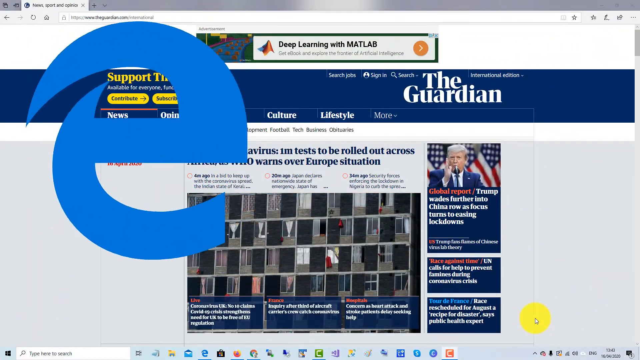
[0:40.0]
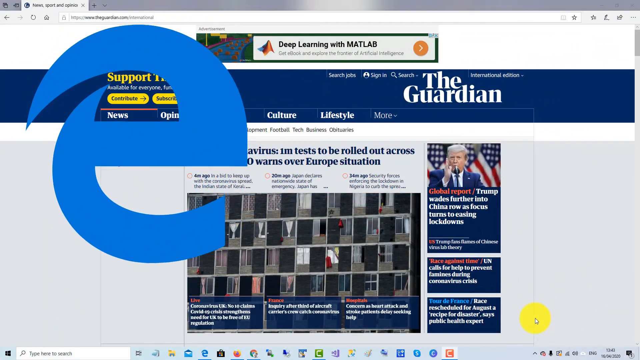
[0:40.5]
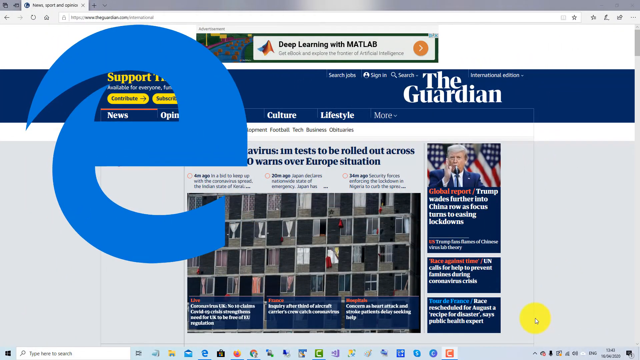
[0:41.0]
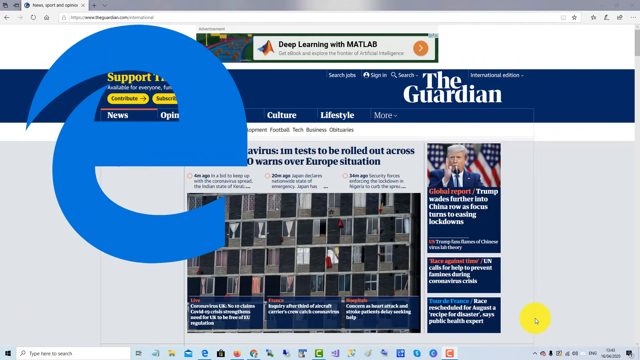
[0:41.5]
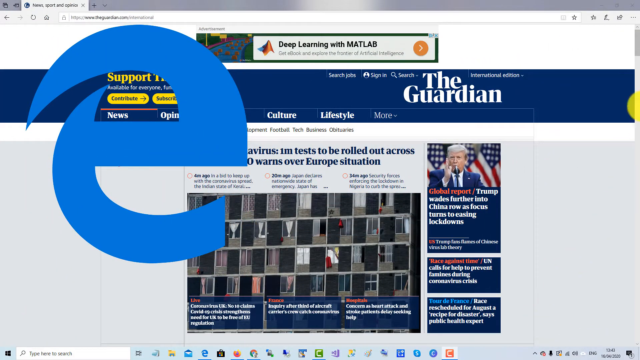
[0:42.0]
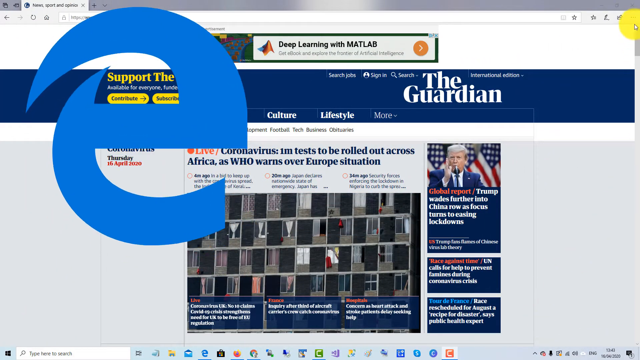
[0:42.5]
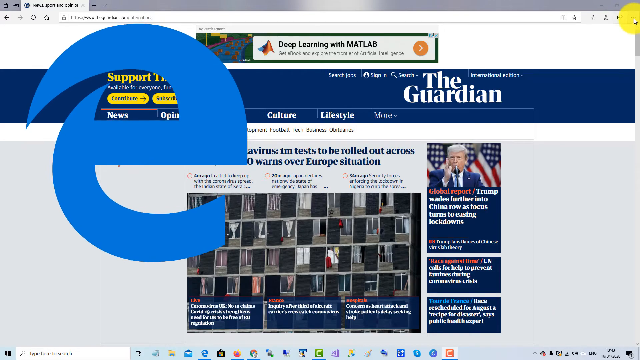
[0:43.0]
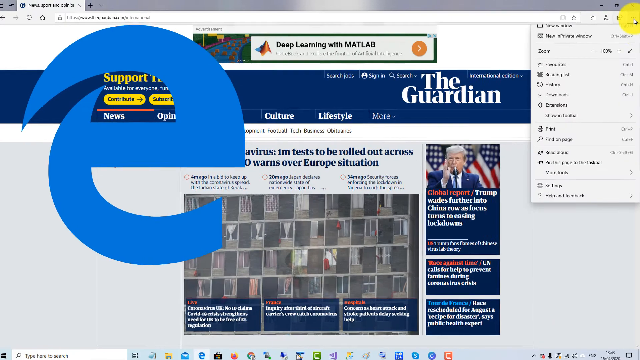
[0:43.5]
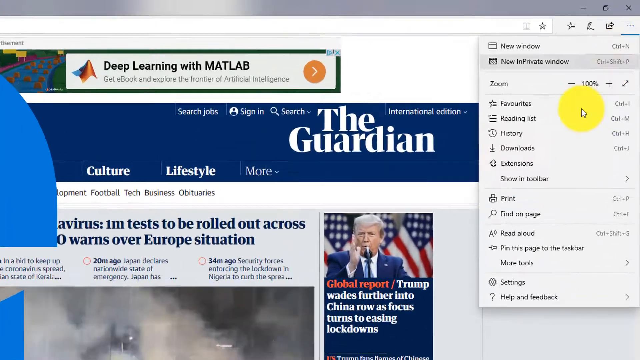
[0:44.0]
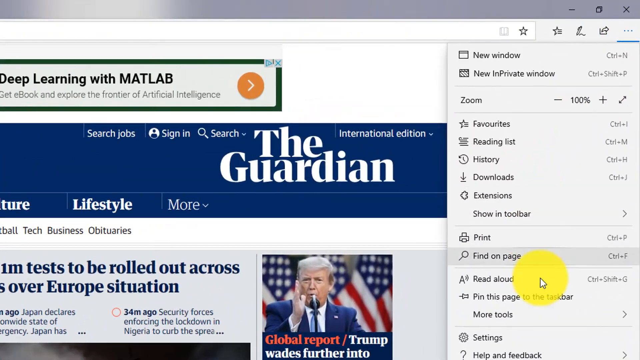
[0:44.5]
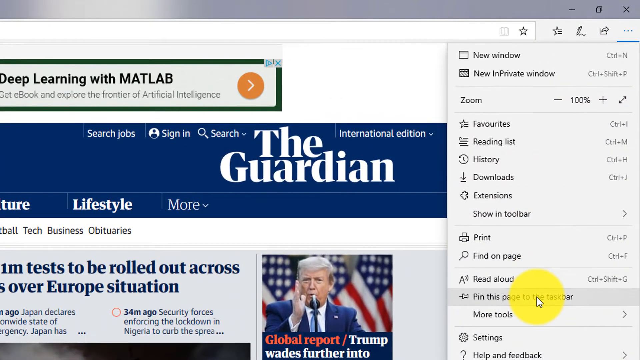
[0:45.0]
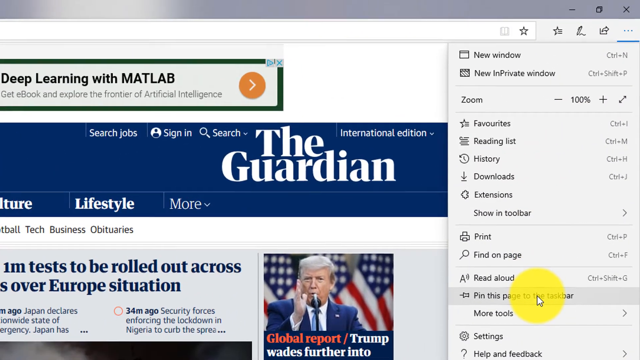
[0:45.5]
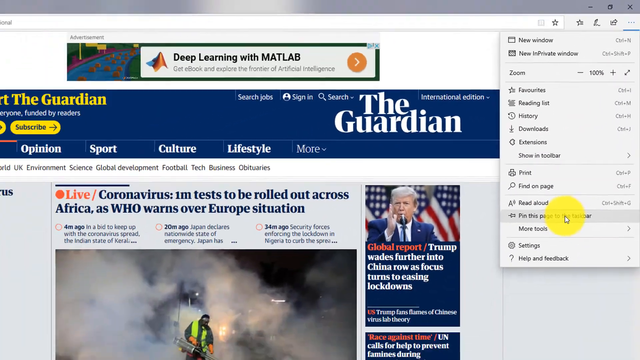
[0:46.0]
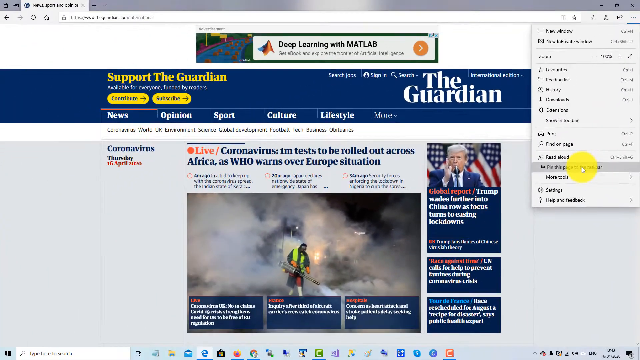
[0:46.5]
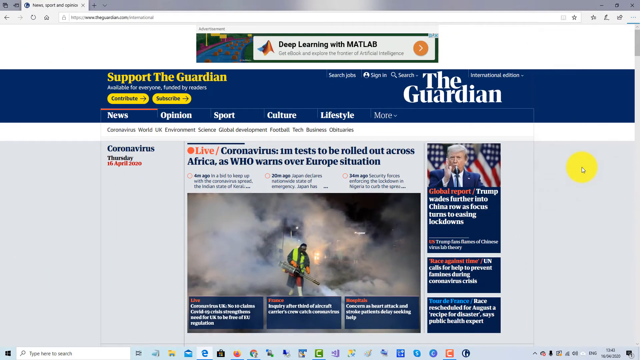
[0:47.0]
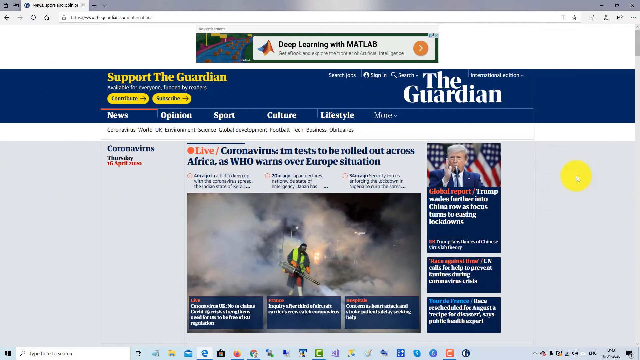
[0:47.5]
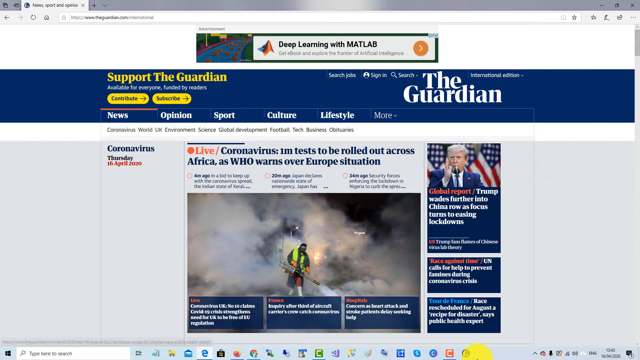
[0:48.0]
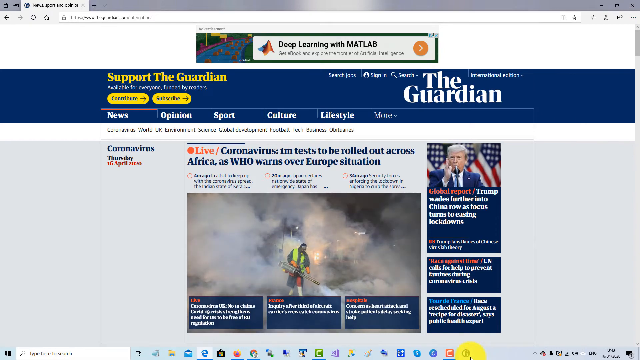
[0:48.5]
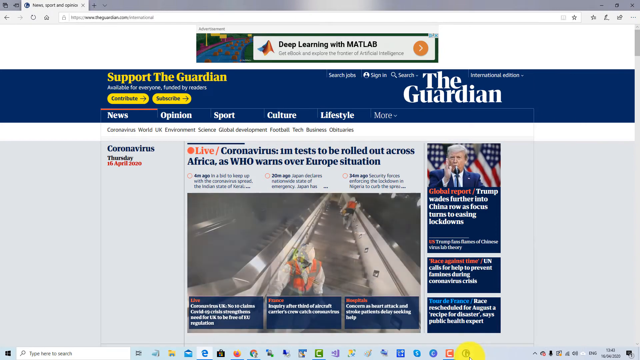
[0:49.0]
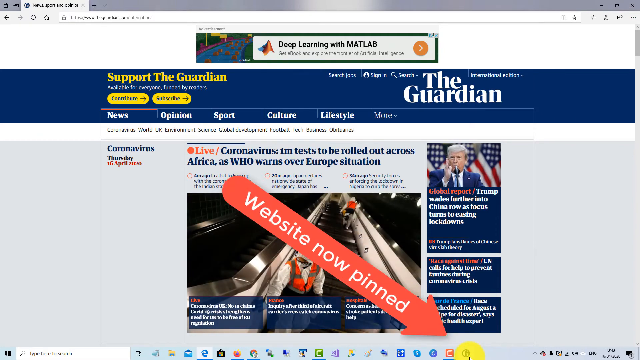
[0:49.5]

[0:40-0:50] The text "website now pinned" appears. The process is shown: clicking, dragging, then pinning. There are three downloads; the file is opened, the website is selected, then dragged and pinned. The demonstration concerns Google Chrome and Microsoft Edge. Text reading "Global Report" appears alongside coronavirus headlines, including one ending "families during coronavirus crisis". A picture shows a person wearing protective clothes.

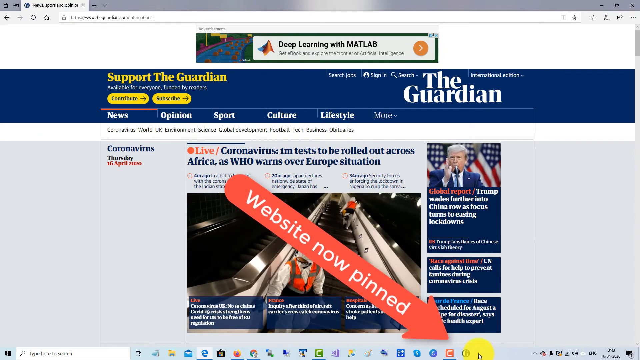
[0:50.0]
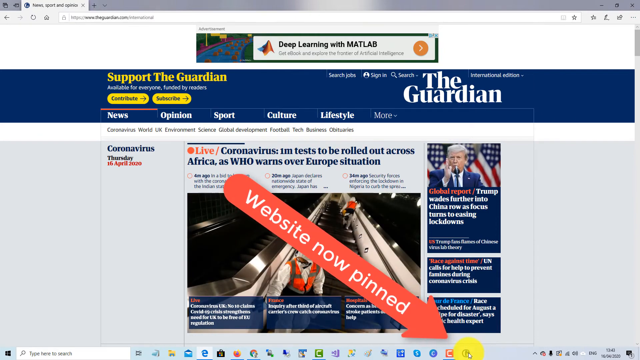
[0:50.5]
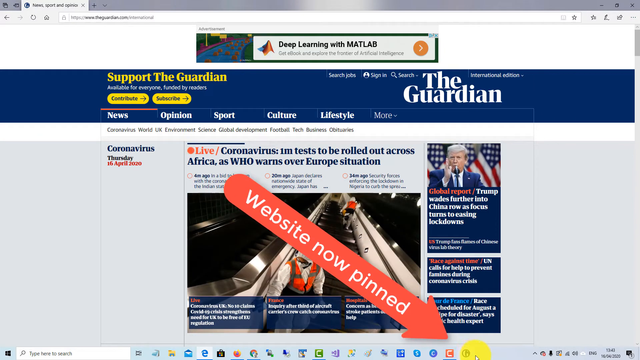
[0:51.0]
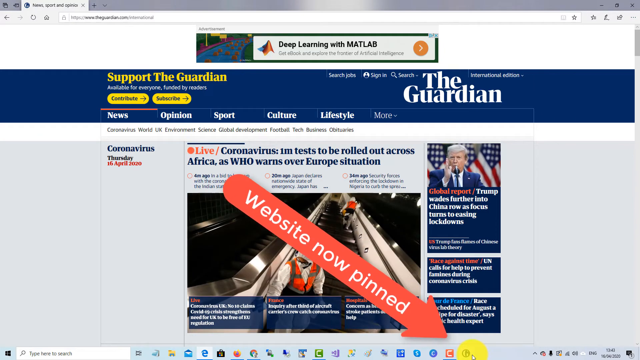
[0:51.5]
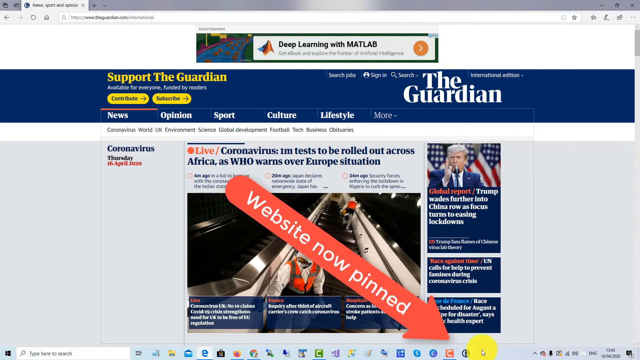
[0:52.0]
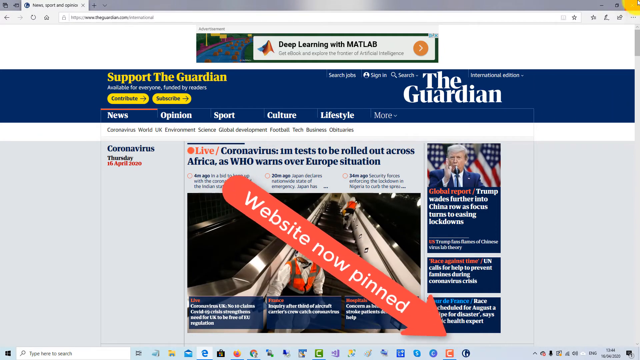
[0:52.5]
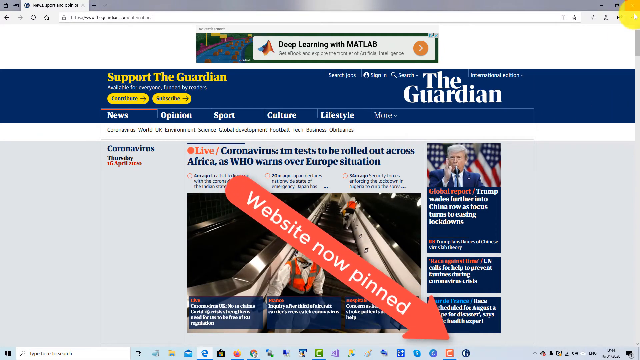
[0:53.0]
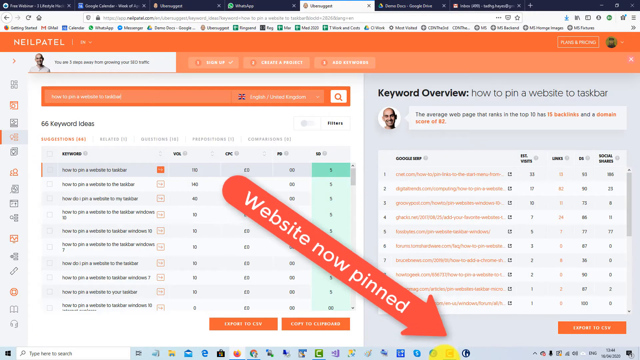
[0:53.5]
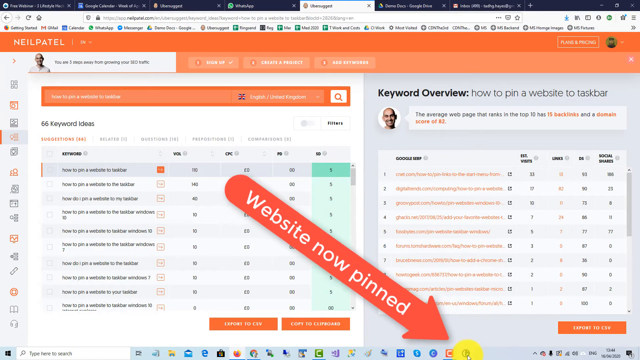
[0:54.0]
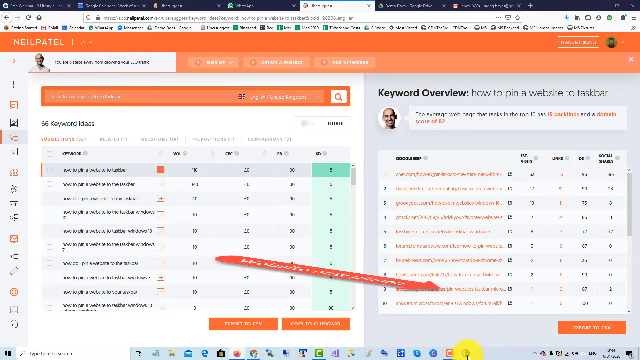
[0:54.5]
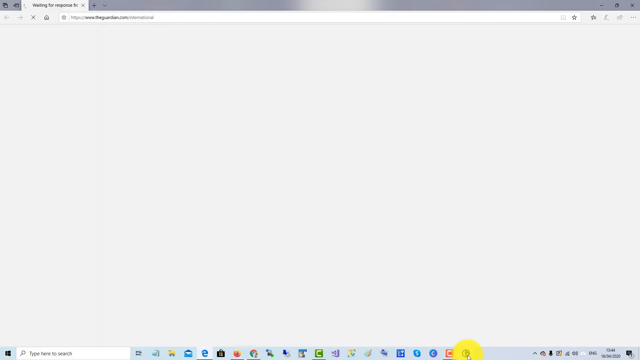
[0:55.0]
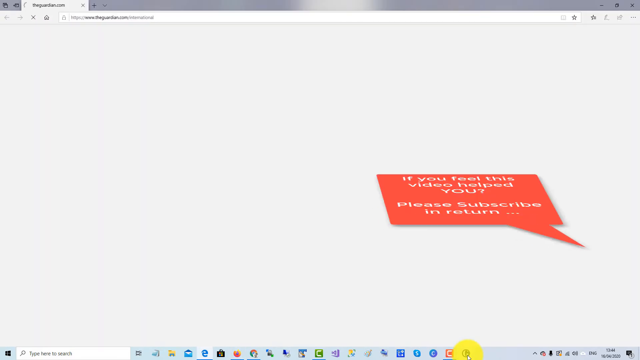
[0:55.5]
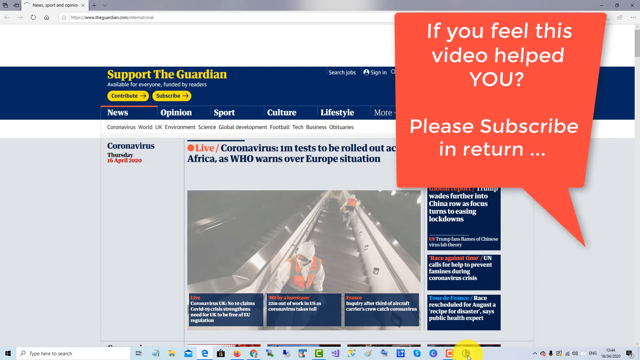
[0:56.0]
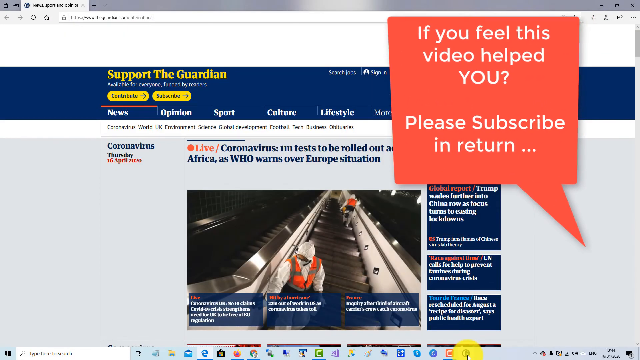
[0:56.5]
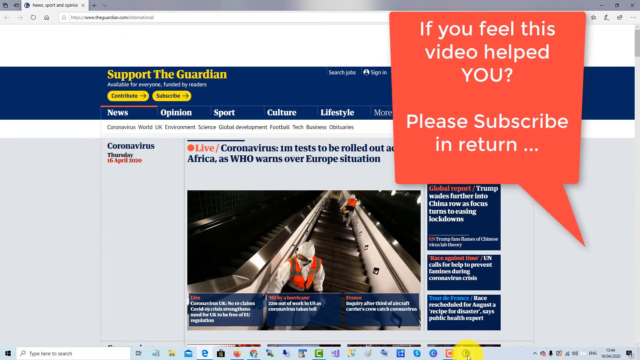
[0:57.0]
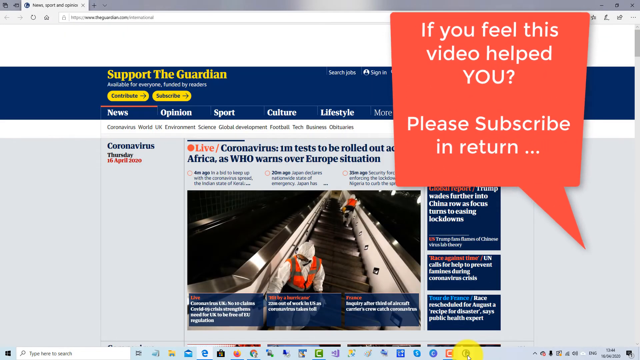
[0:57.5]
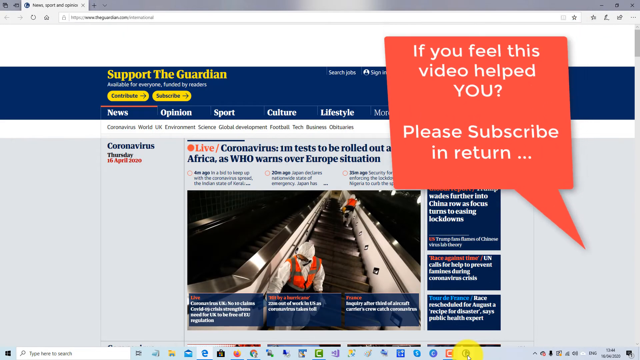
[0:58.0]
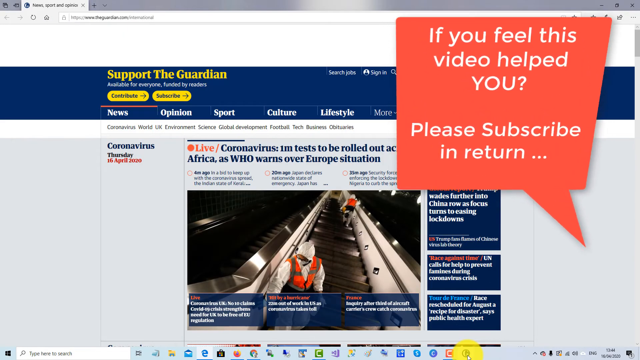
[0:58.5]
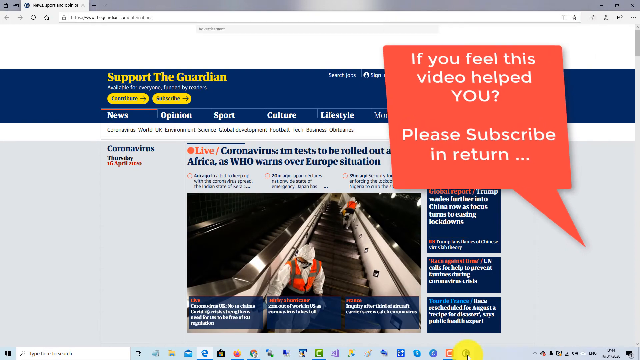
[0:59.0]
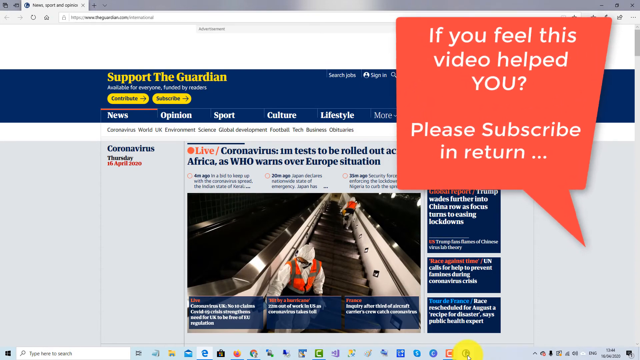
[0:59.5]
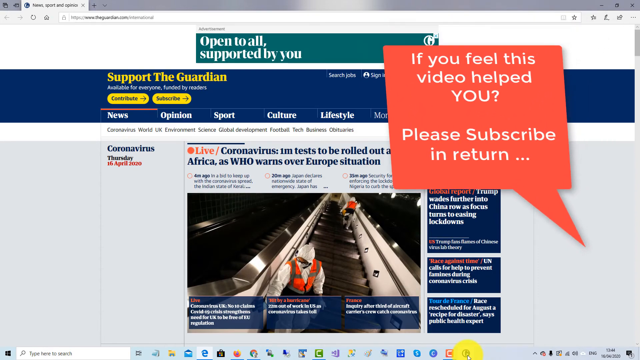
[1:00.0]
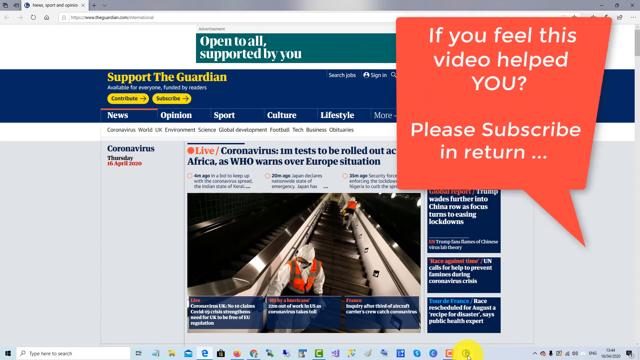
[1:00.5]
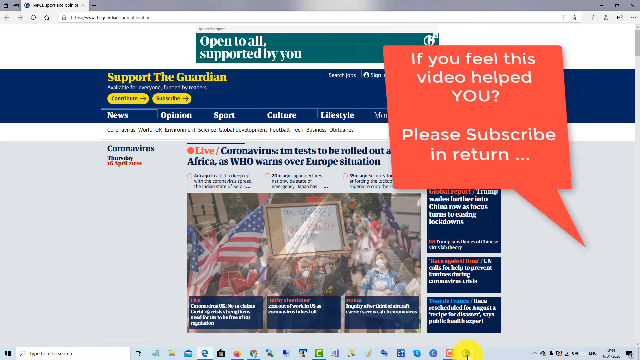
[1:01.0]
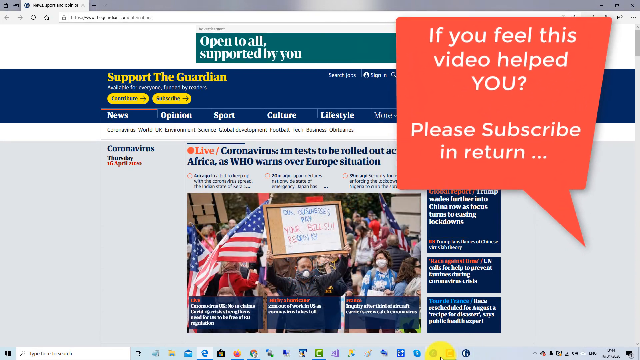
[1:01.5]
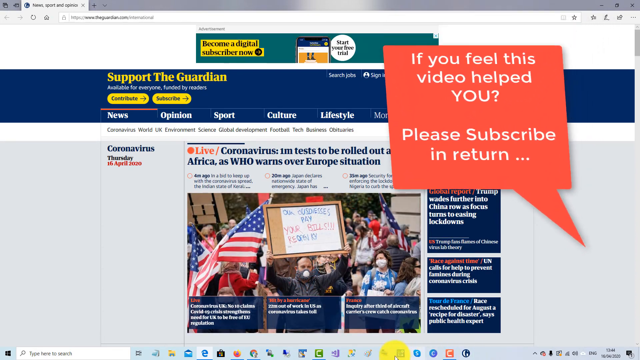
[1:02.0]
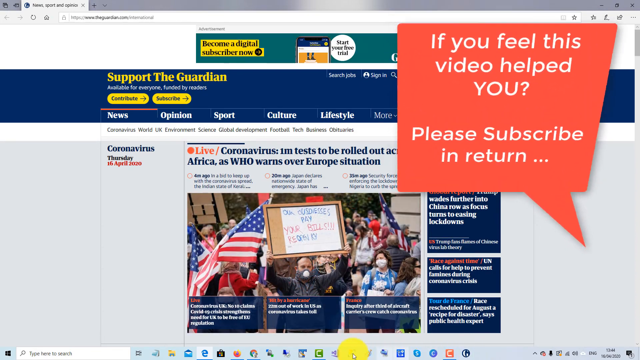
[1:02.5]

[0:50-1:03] Text reads "this video will show you how to pin a website to the taskbar on the Google Chrome", followed by a demonstration of where to click, in lettering too small to read properly. The Guardian file is clicked, dragged and pinned, then opened. The cursor goes to the corner, the file is pinned, and the view returns with the text "website now pinned". Text then reads "If you feel like this video helped you, please subscribe". The demonstration is short and the text is small, but the process seems easy.